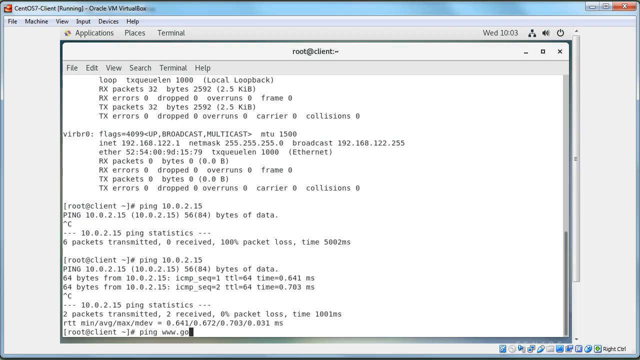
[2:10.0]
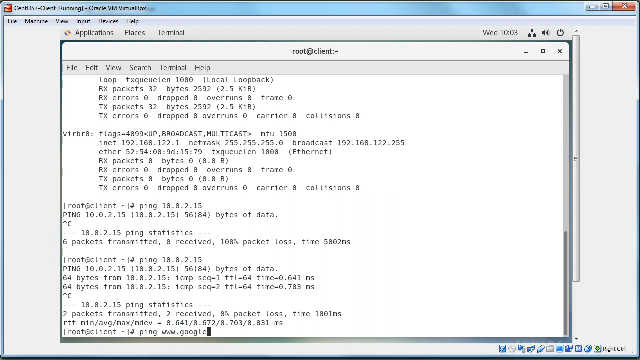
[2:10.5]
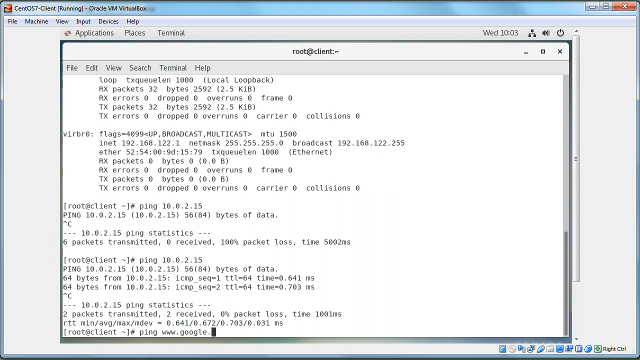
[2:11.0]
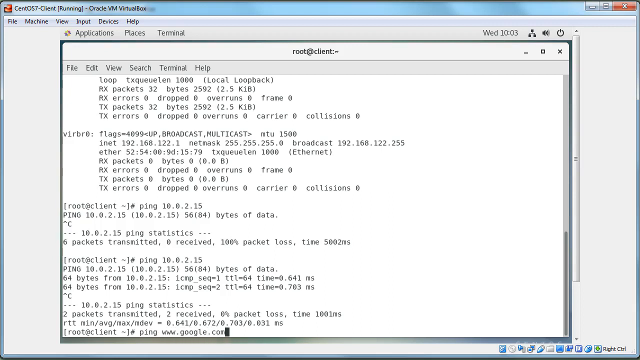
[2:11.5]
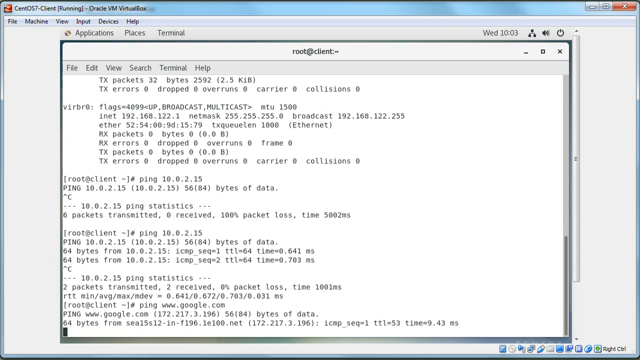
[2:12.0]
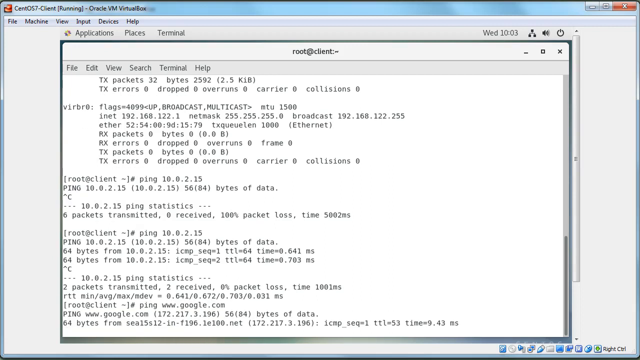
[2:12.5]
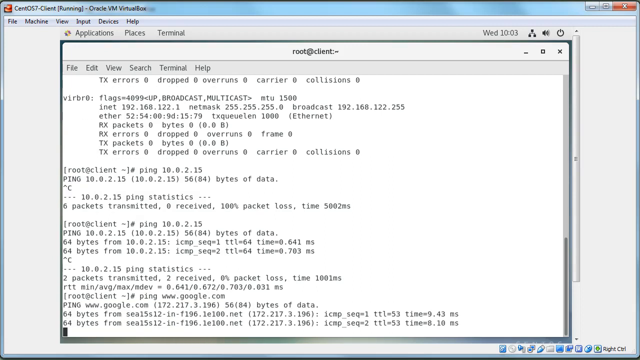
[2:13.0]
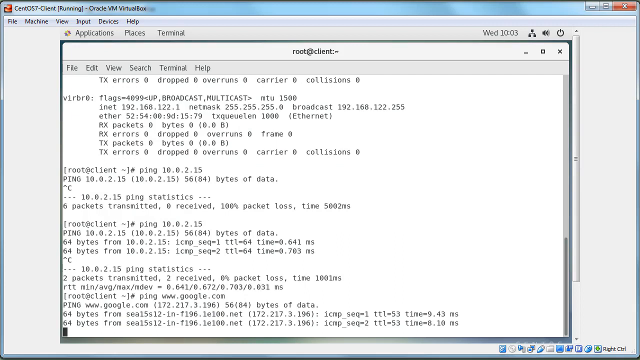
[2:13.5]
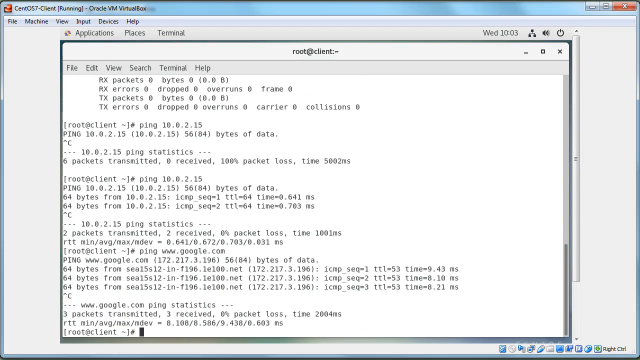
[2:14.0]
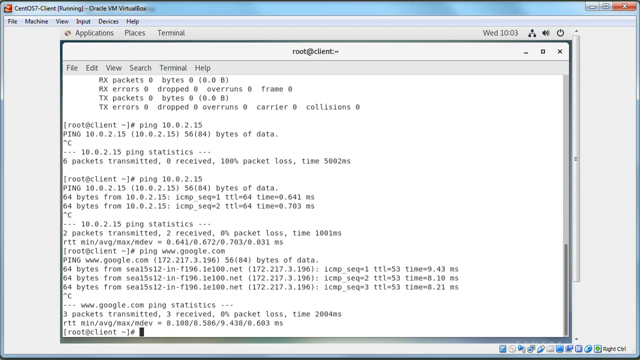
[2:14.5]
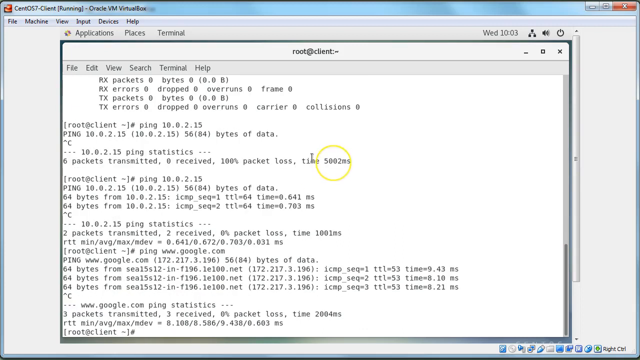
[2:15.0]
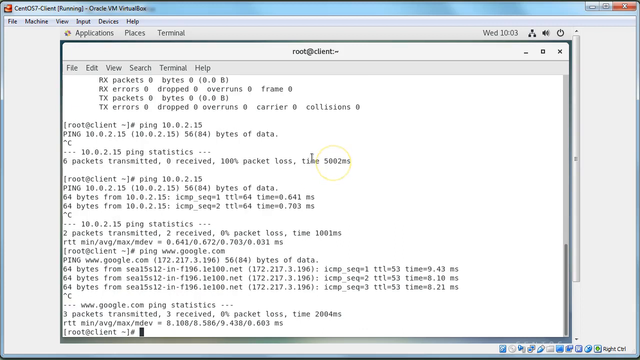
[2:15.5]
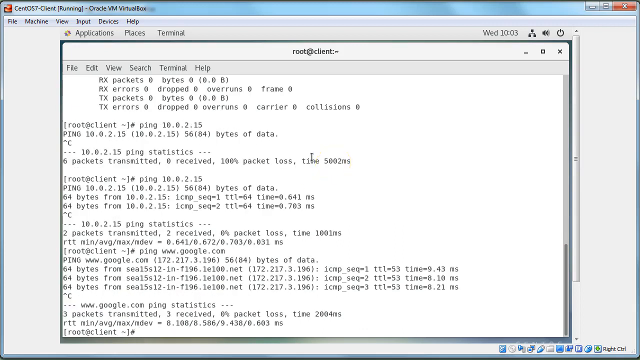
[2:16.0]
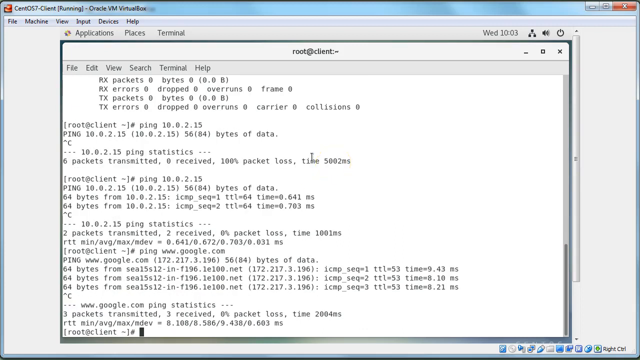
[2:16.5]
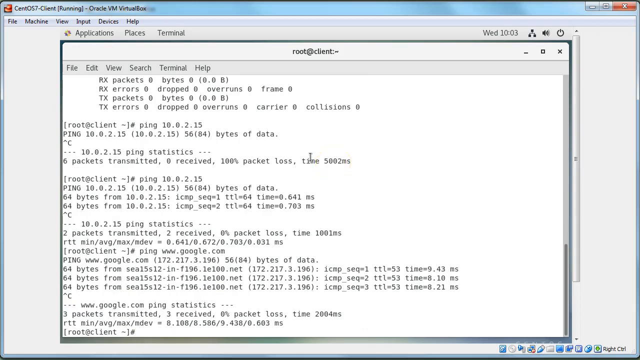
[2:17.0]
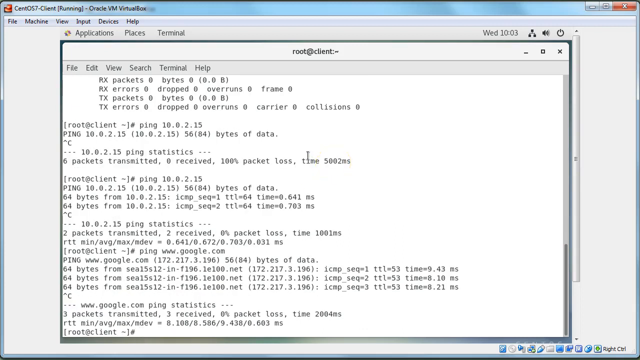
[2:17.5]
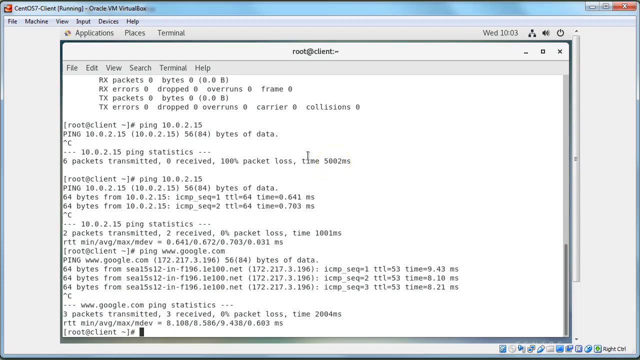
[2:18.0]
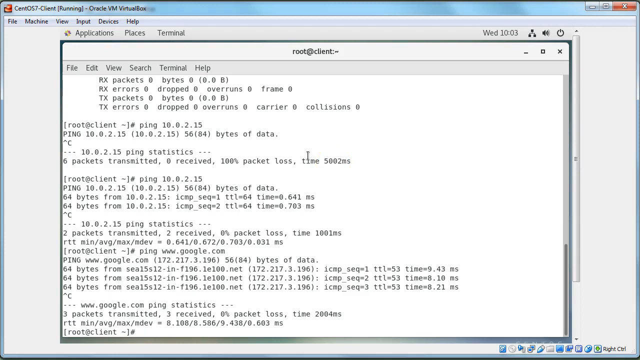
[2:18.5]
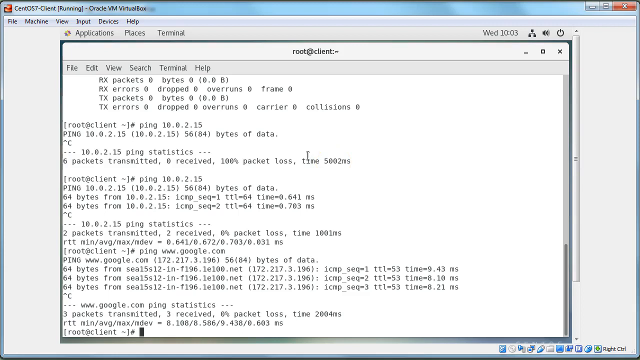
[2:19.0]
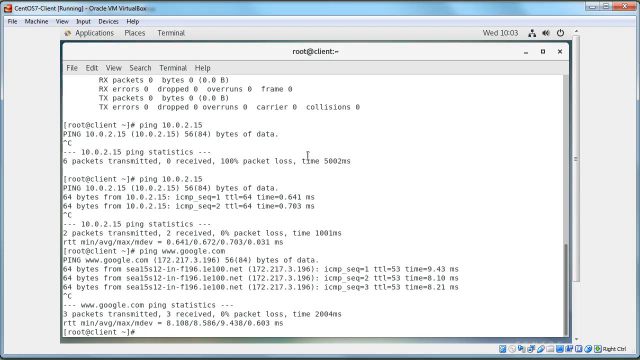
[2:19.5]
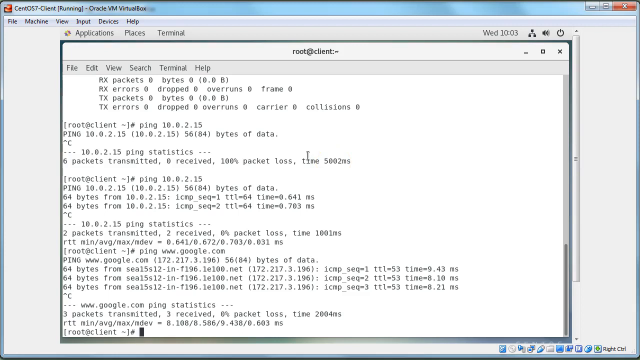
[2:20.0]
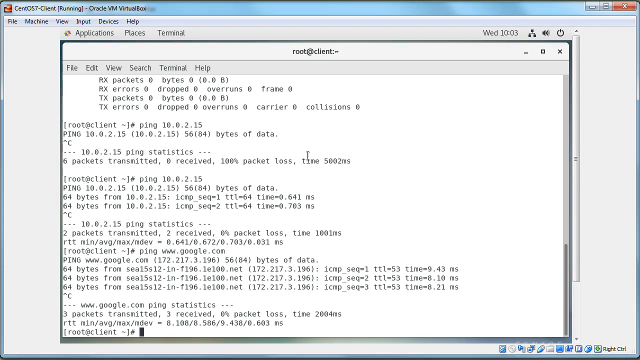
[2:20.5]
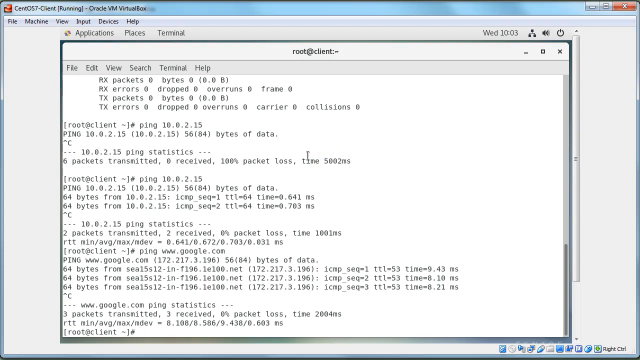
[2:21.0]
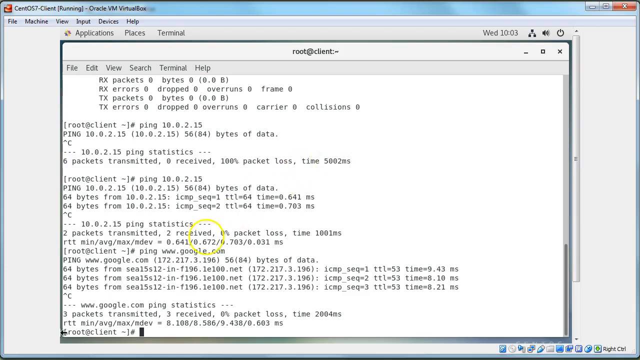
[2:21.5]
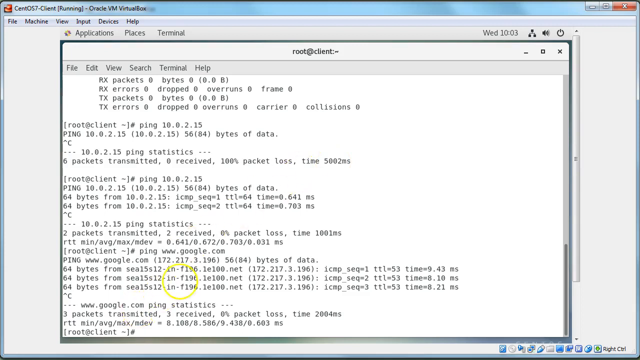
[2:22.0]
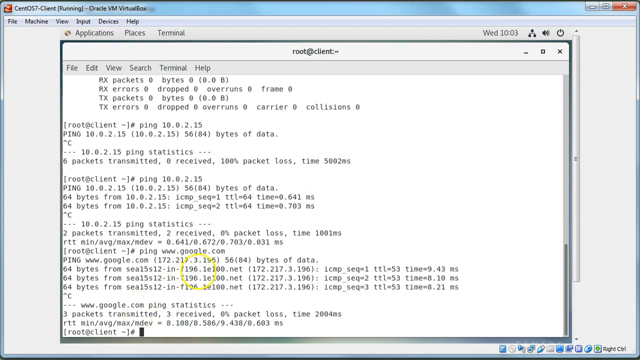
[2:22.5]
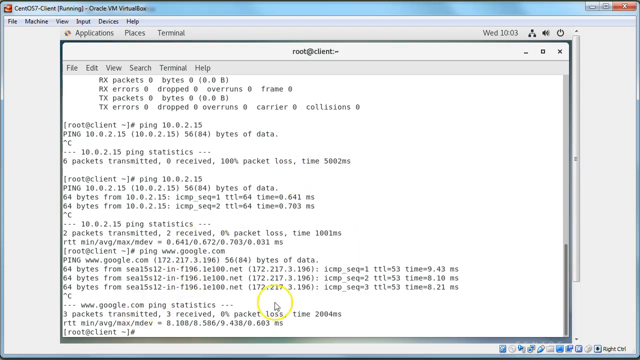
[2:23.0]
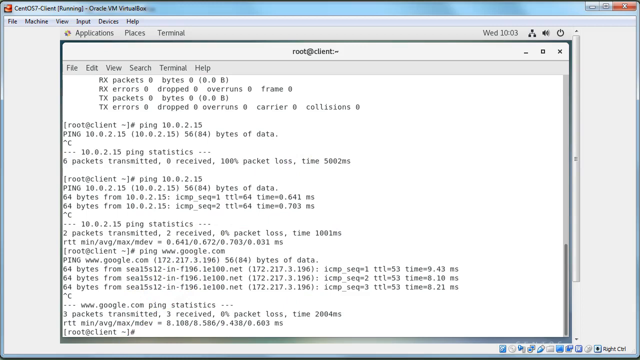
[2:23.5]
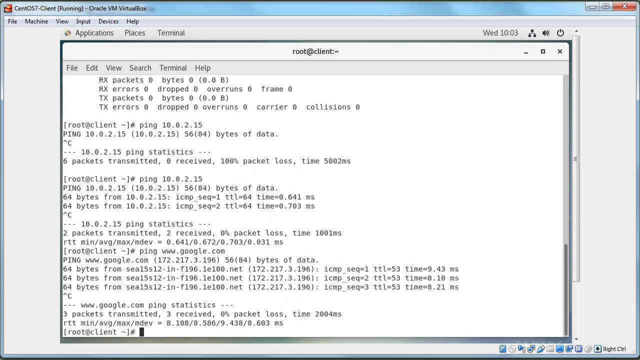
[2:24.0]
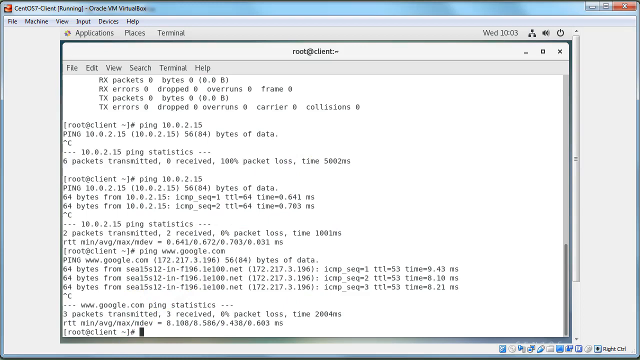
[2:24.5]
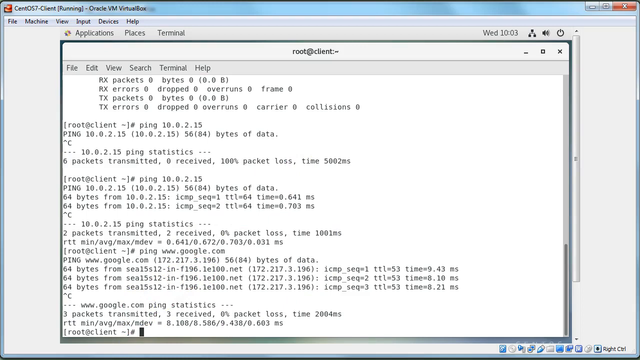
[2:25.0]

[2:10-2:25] The terminal of one of the virtual machines he is running in Oracle VM VirtualBox is shown in light mode with an overall white background. The main terminal is in the middle, with previously run commands showing the different flags. At the bottom is the ping command for 10.0.2.4, showing 56(84) bytes of data and 64 bytes from that IP with the time taken. Then the command up arrow C shows the 10.0.2.4 ping statistics: two packets transmitted, two received, 0% packet loss, time 1000 milliseconds. Next the command ping 10.0.2.15 shows the ping for that server, with 56(84) bytes of data and 64 bytes read with a time under one millisecond, and up arrow C shows the 10.0.2.15 ping statistics. He then runs ping www.google.com, showing the ping for www.google.com with 56(84) bytes of data, and up arrow C shows the 10.0.2.15 ping statistics. He runs ping www.google.com again, showing the bytes read from that server, and then up arrow C shows the www.google.com ping statistics.